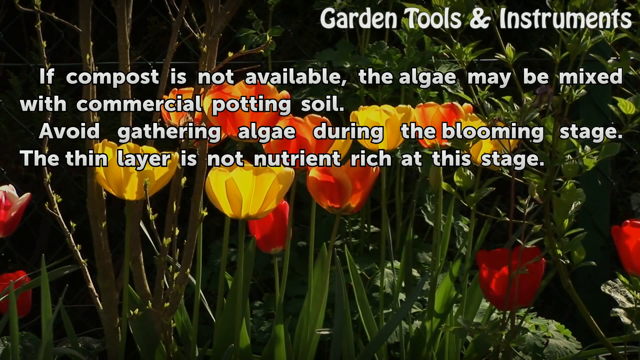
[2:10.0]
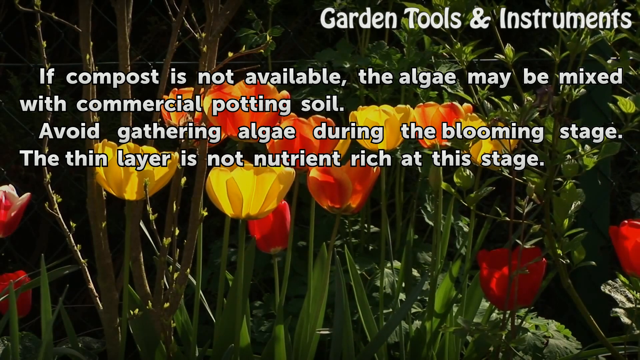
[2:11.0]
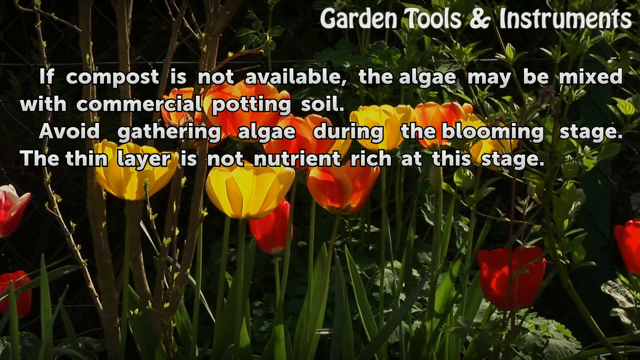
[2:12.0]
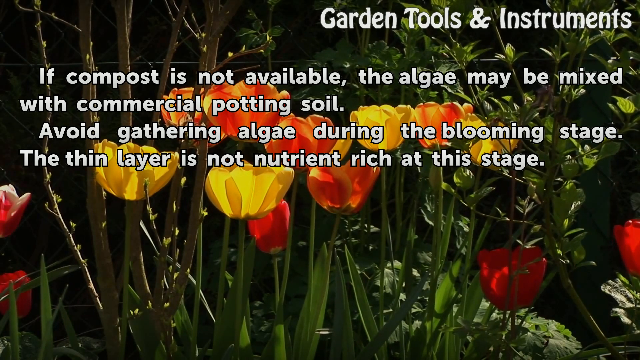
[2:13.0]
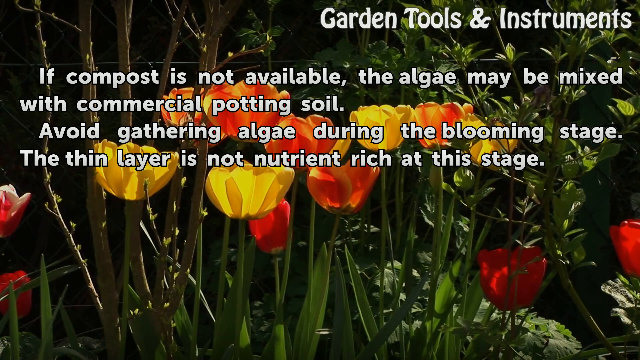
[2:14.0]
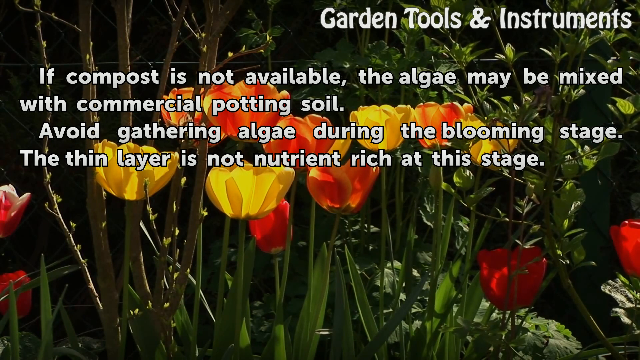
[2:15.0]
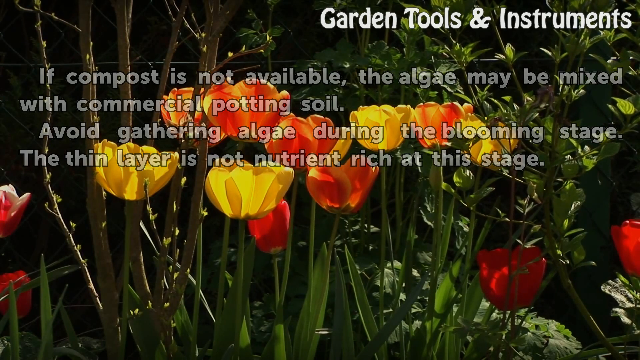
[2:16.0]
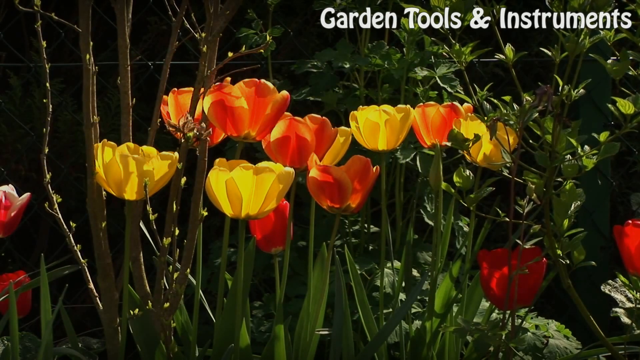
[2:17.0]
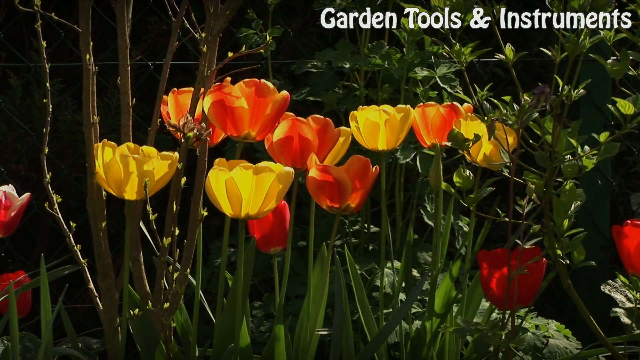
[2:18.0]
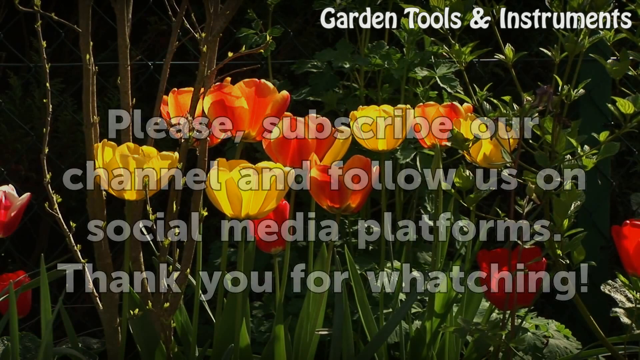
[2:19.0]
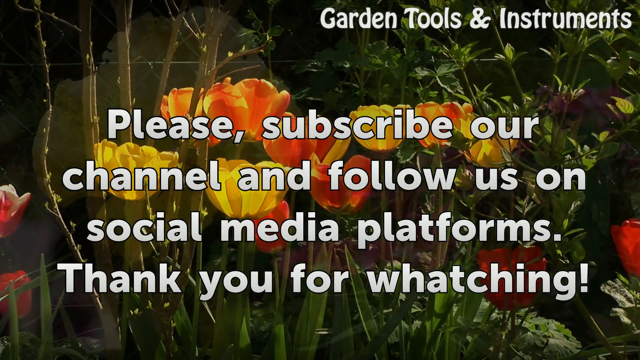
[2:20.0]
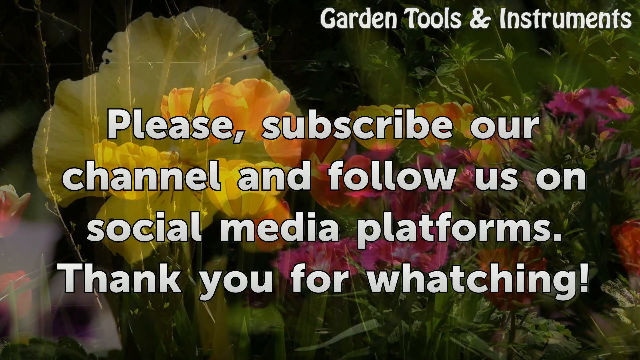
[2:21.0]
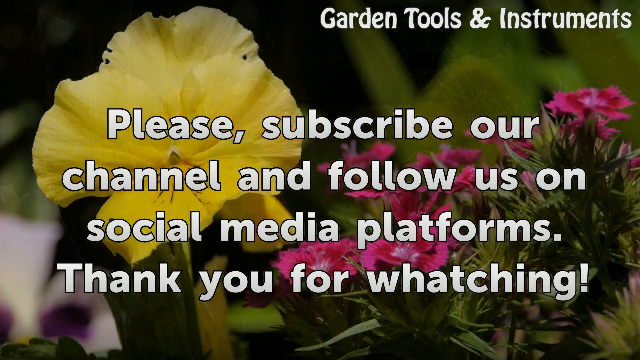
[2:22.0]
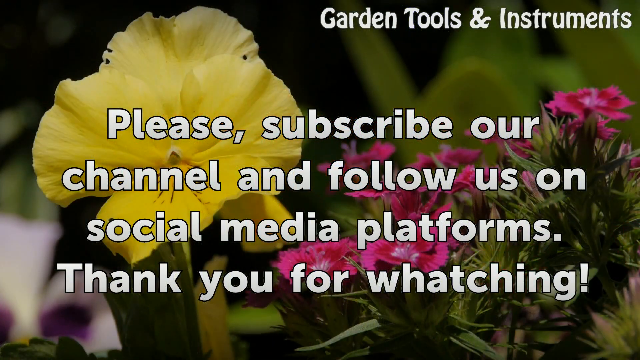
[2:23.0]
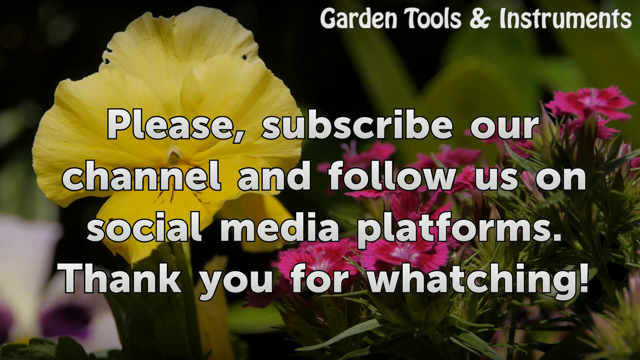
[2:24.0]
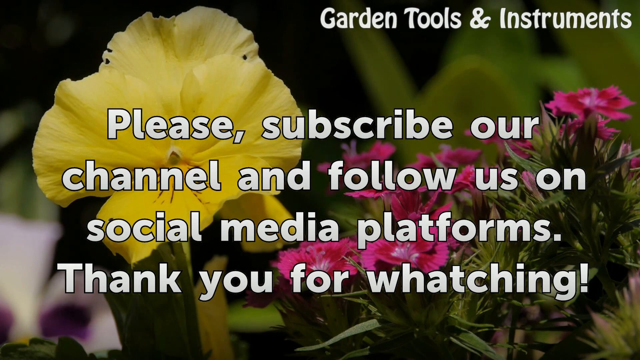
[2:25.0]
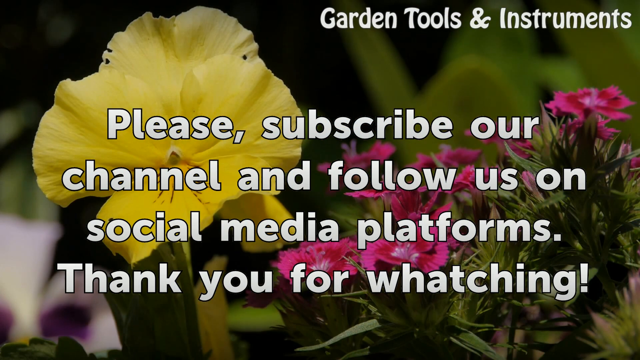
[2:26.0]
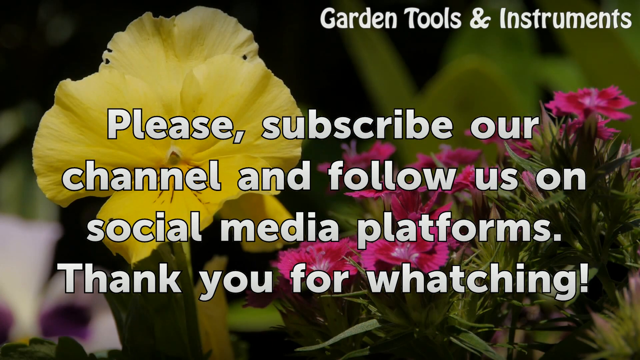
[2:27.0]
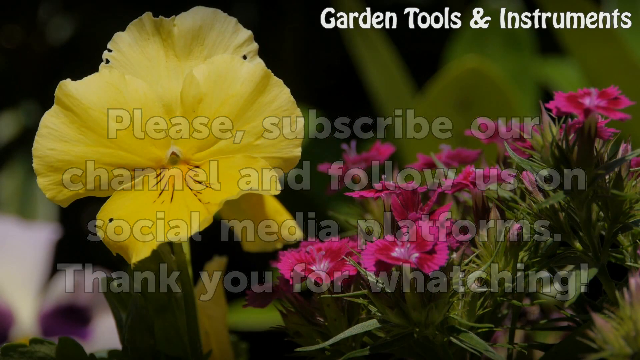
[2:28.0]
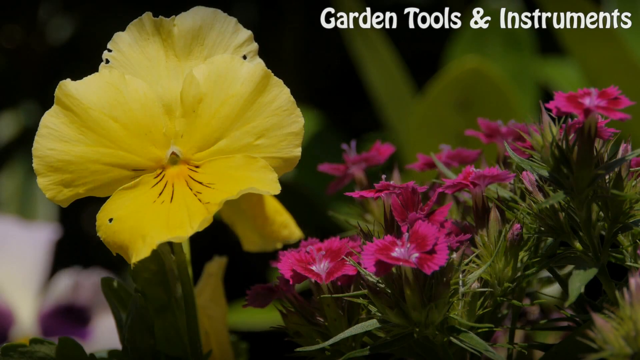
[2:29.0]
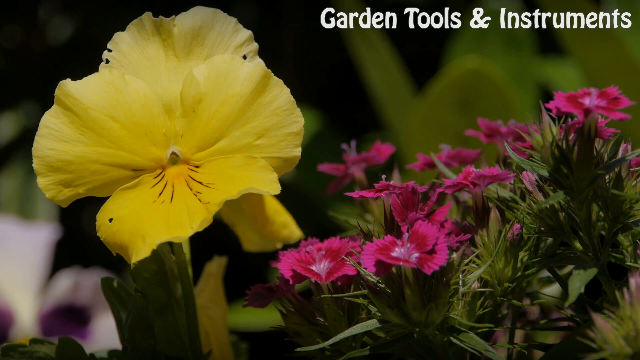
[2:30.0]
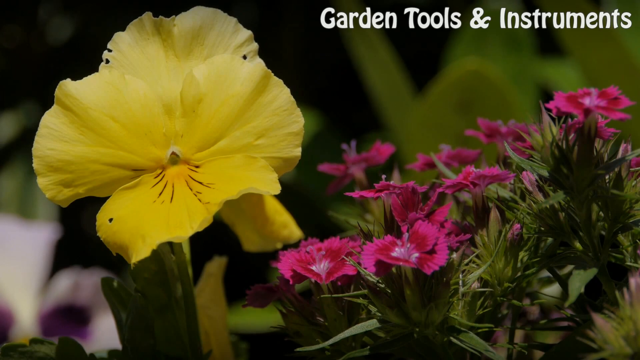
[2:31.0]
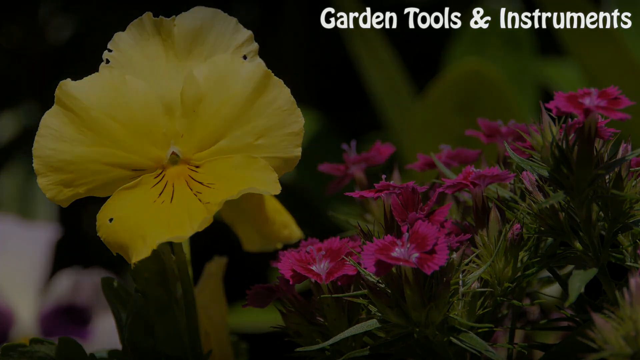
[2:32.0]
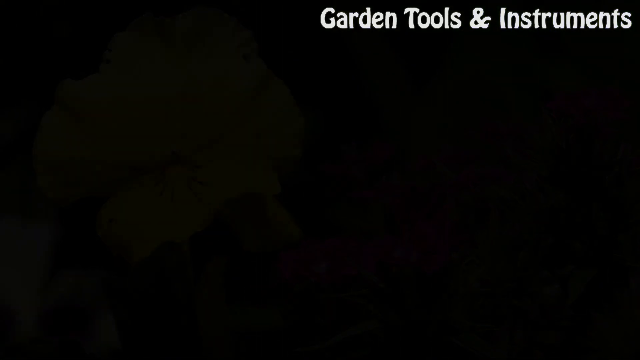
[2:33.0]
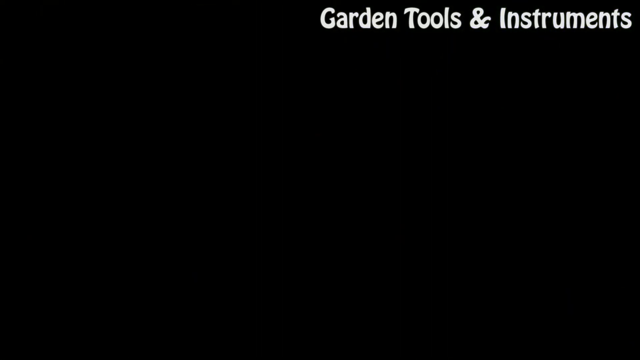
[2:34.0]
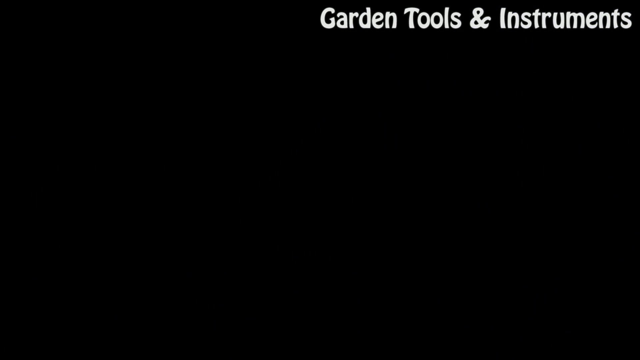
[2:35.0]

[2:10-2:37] Still under garden tools and instruments, the text reads "If compost is not available, the algae may be mixed with commercial potting soil. Avoid gathering algae during the blooming stage. The thin layer is not nutrient rich at this stage." The video is mostly still, with tulips wavering slightly in the background, and then other kinds of flowers come up. The text "please subscribe to our channel" appears. An ad about deaf people follows.